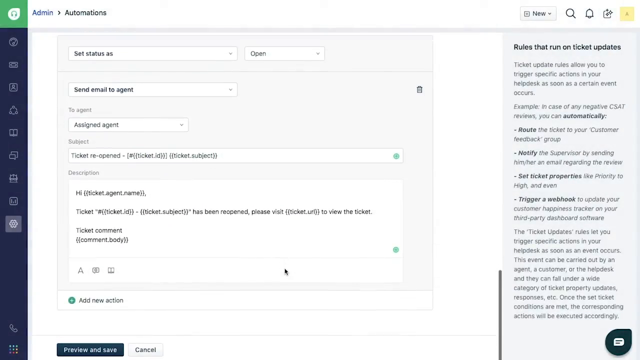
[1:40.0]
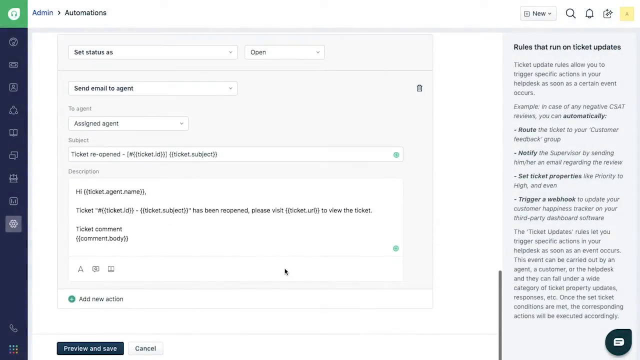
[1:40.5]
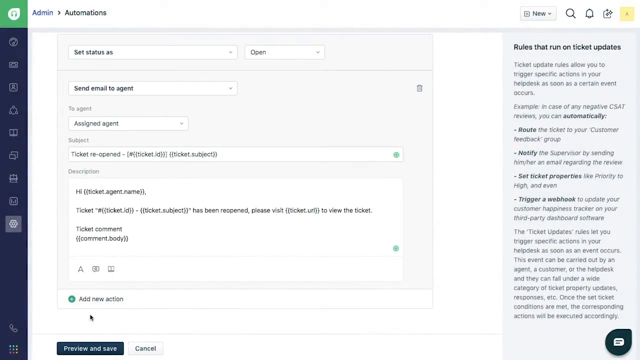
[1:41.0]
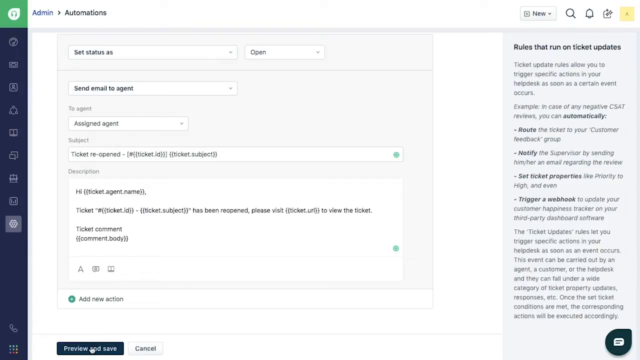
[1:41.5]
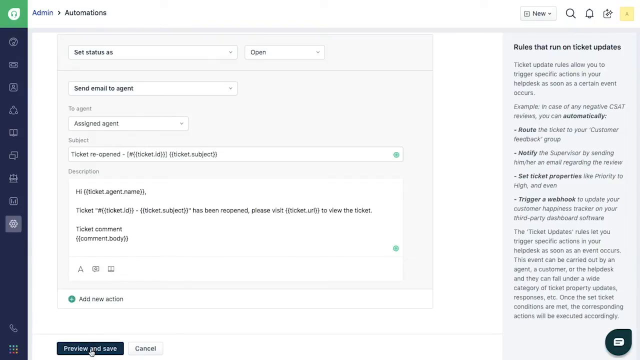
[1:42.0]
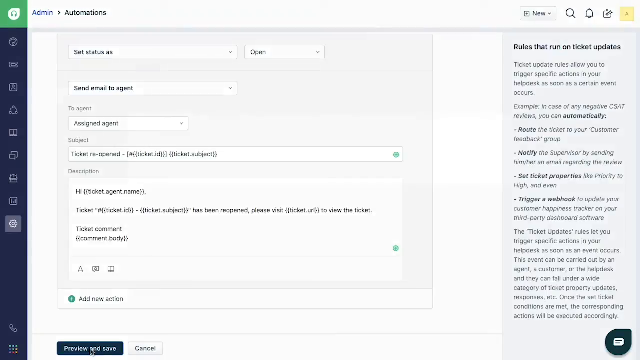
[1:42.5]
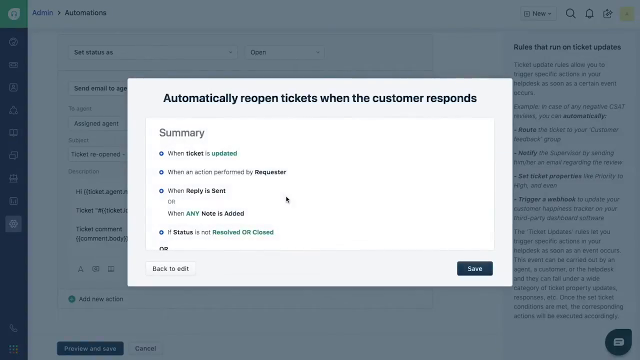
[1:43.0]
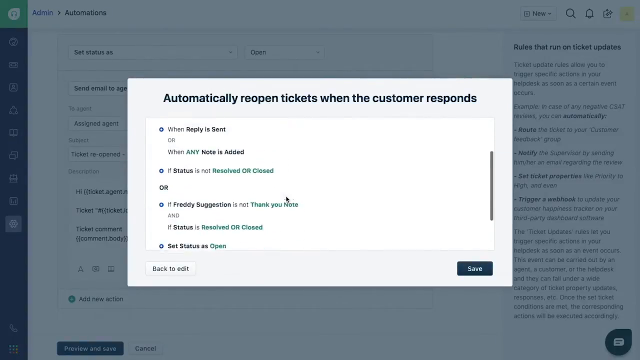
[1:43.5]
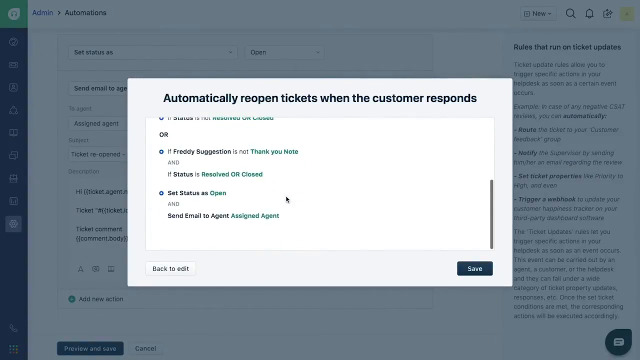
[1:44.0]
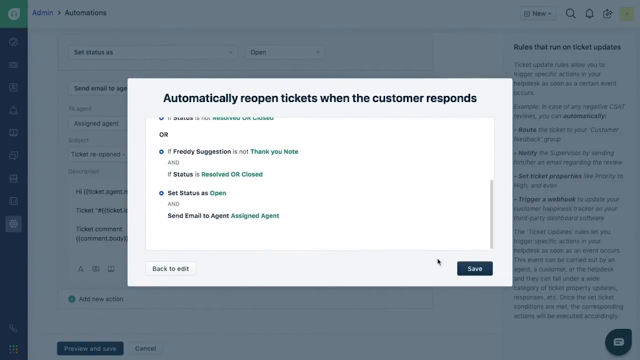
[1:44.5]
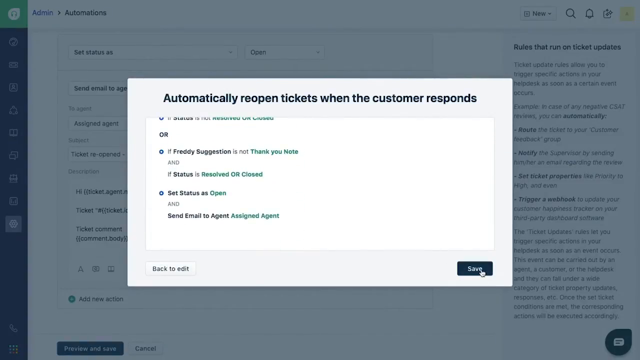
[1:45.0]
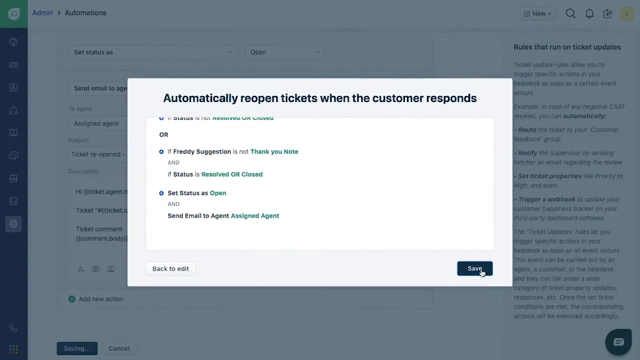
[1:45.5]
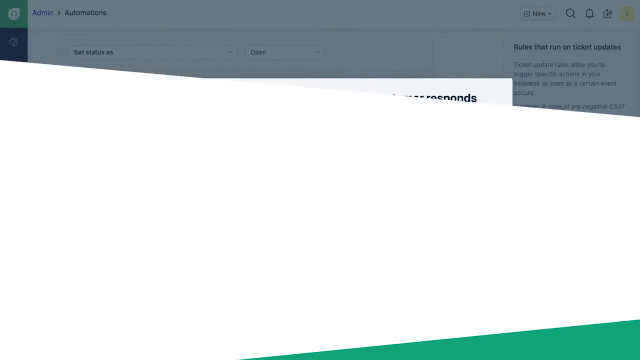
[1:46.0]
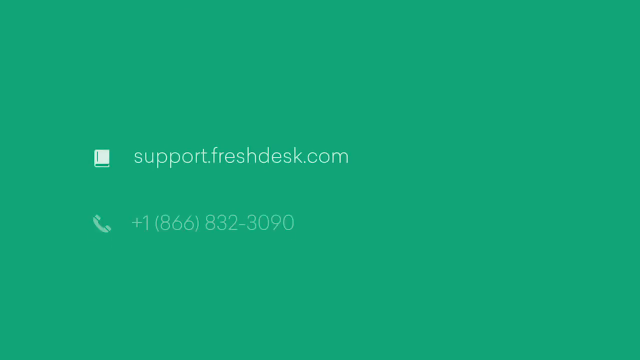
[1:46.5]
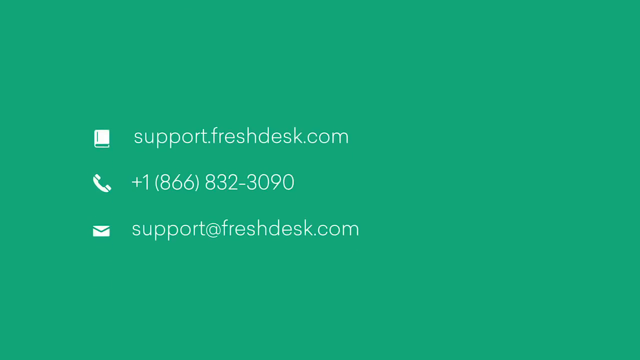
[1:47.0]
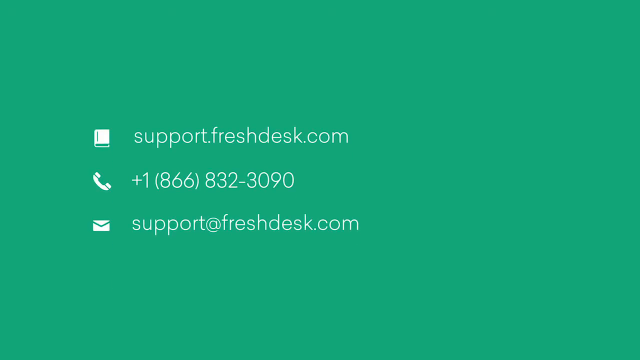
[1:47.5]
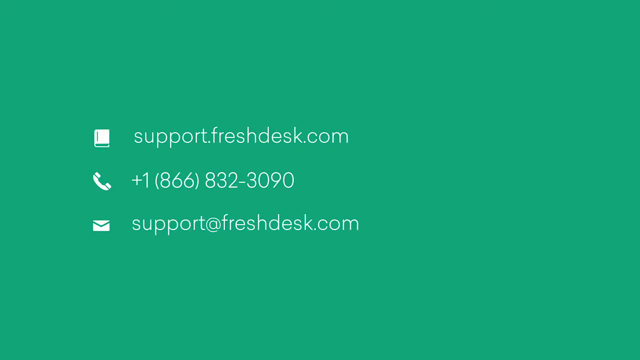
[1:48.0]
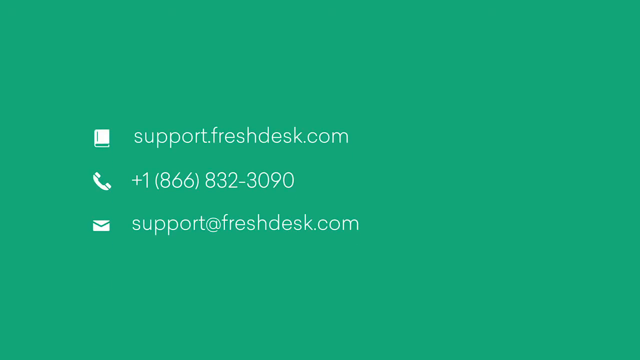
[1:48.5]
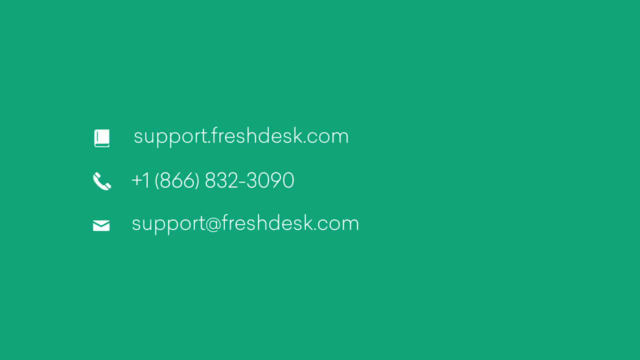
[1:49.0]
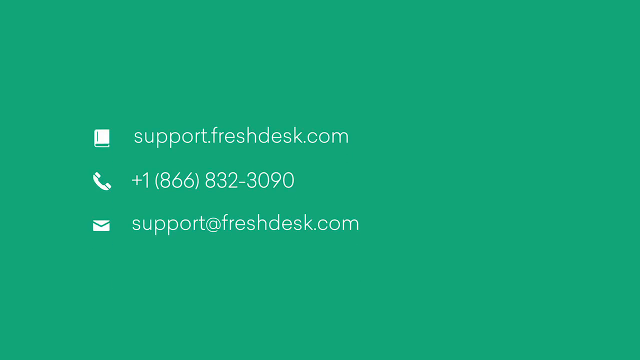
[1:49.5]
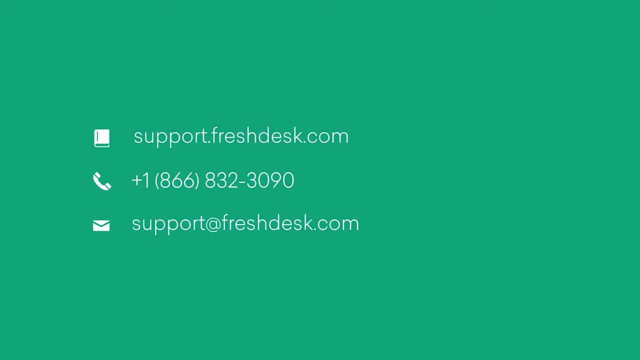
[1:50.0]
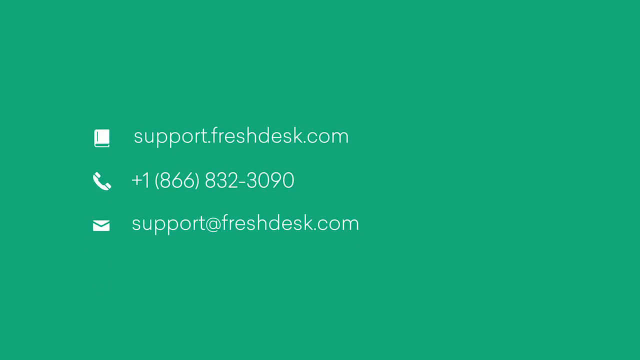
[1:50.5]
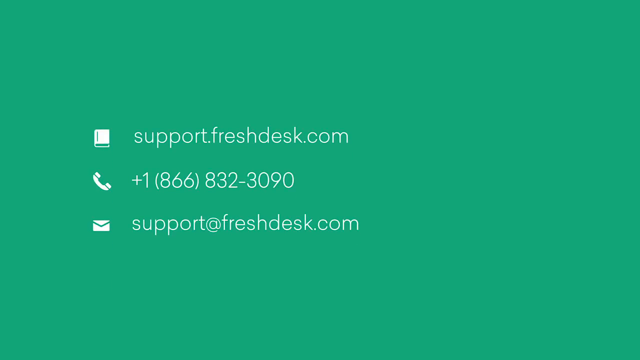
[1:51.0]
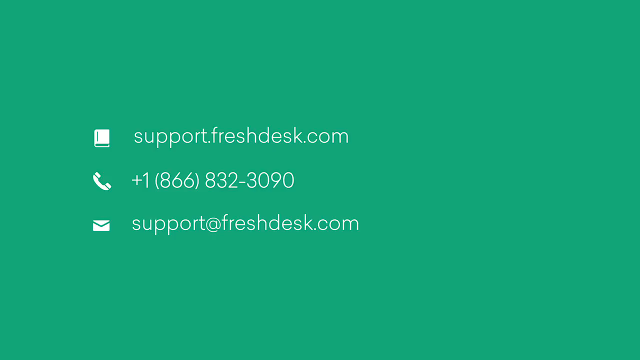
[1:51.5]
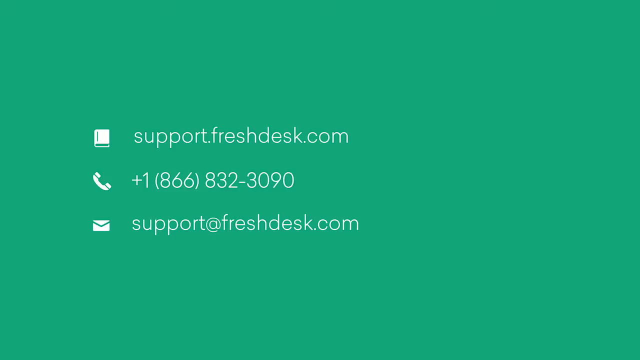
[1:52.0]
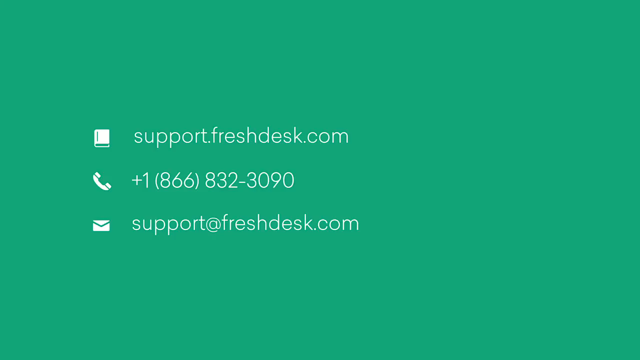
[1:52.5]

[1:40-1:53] The screen recording shows the settings of a ticket automation system, with a rule set that sets status as open, sends an email to the assigned agent with "ticket reopened," and has various sections to be auto-filled with the ticket ID, the ticket subject, and the agent's information. The user clicks save settings, which opens a pop-up reading "automatically reopened tickets when the customer responds," and saves it. The video then cuts to a green-background title card with text reading "support.freshdesk.com. 1-866-832-3090. Support at freshdesk.com."